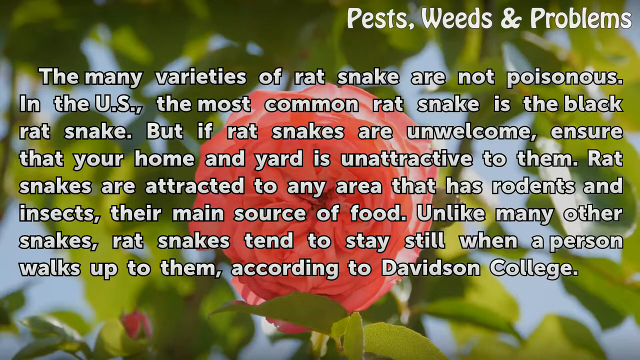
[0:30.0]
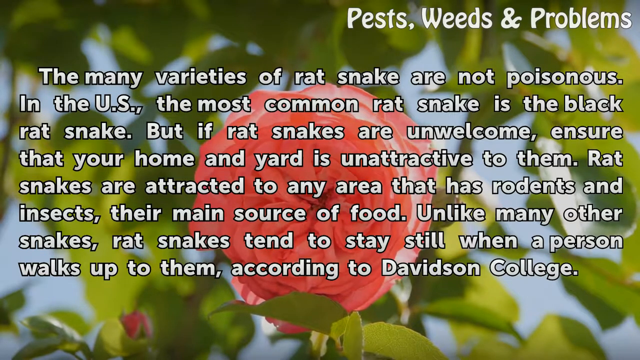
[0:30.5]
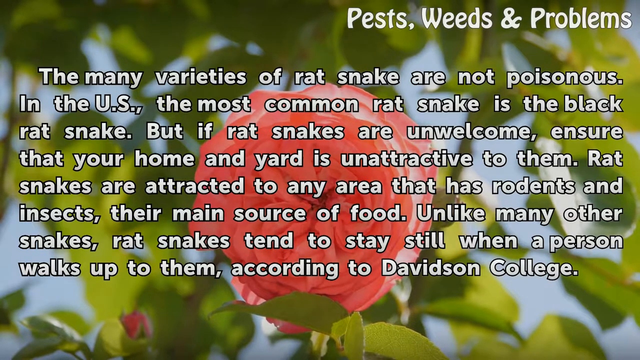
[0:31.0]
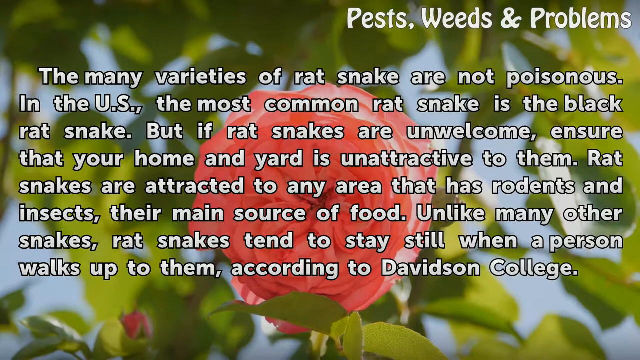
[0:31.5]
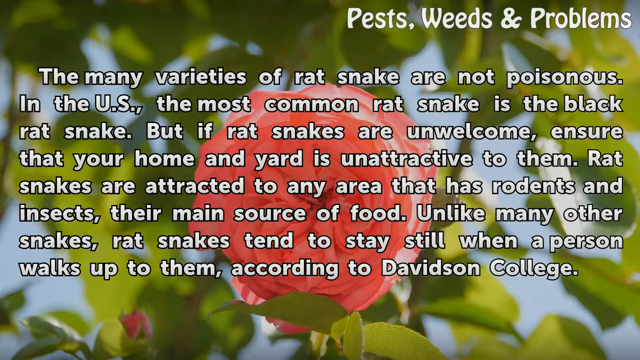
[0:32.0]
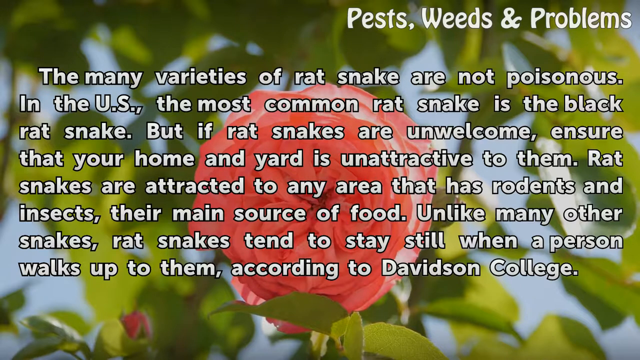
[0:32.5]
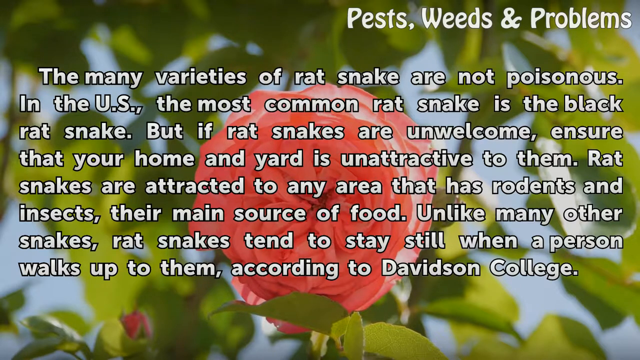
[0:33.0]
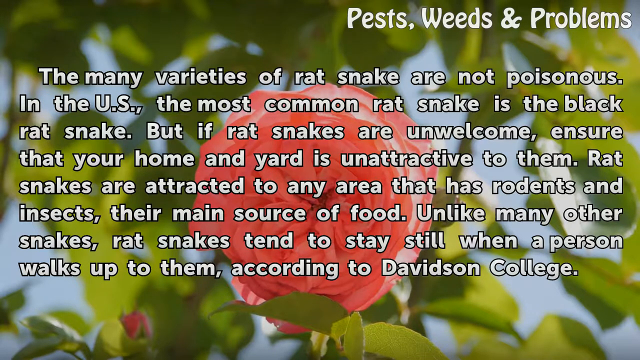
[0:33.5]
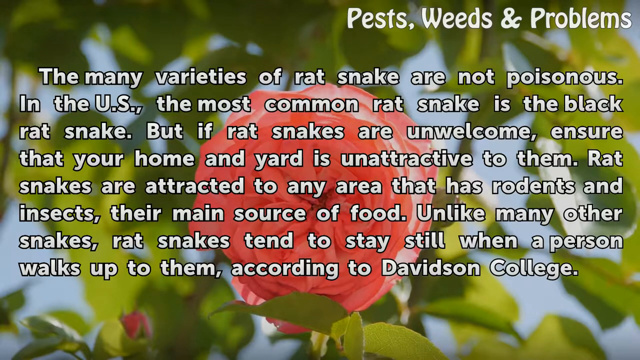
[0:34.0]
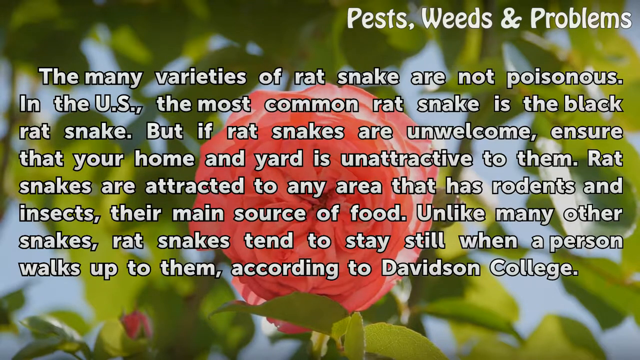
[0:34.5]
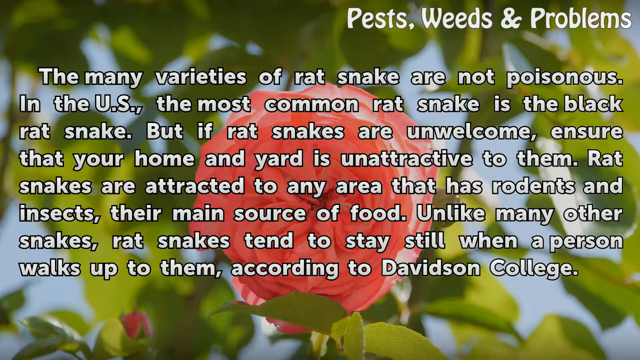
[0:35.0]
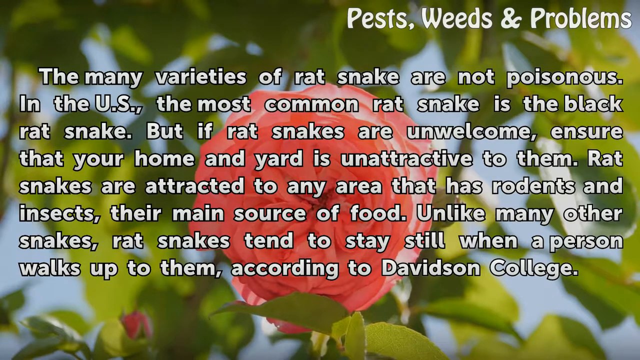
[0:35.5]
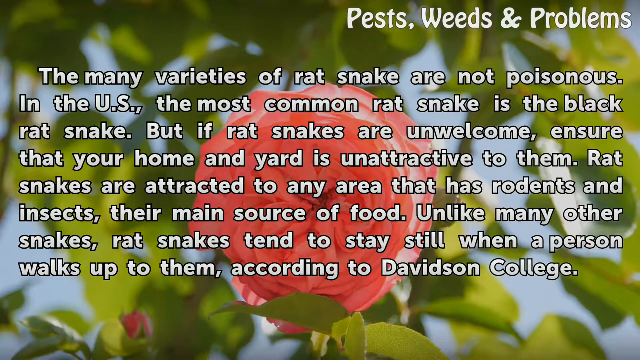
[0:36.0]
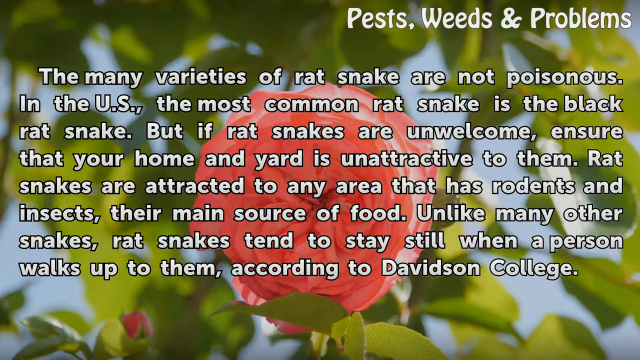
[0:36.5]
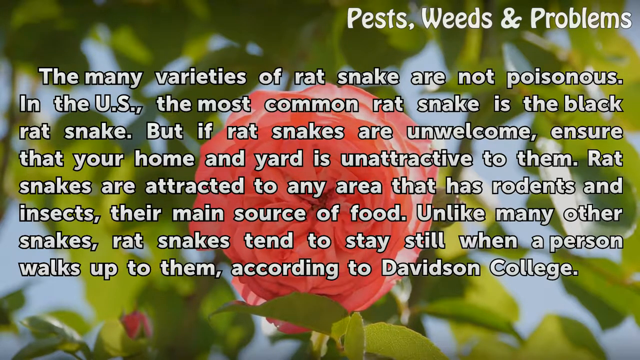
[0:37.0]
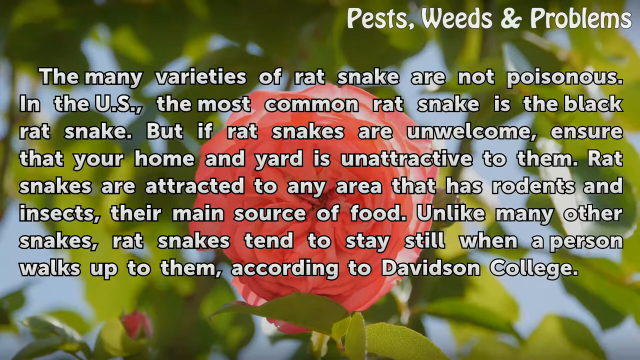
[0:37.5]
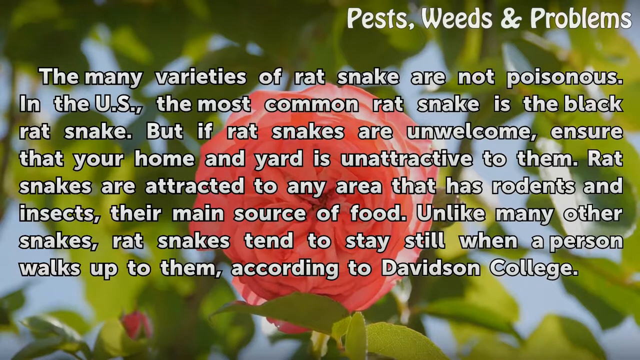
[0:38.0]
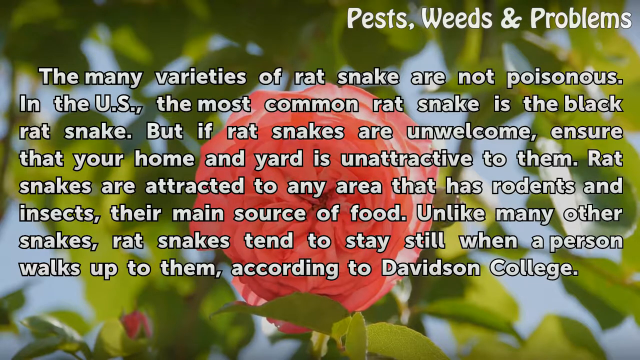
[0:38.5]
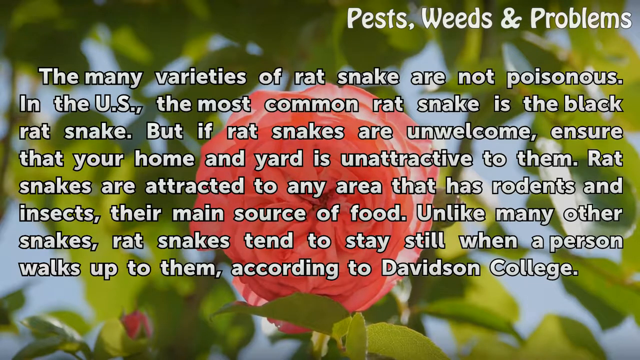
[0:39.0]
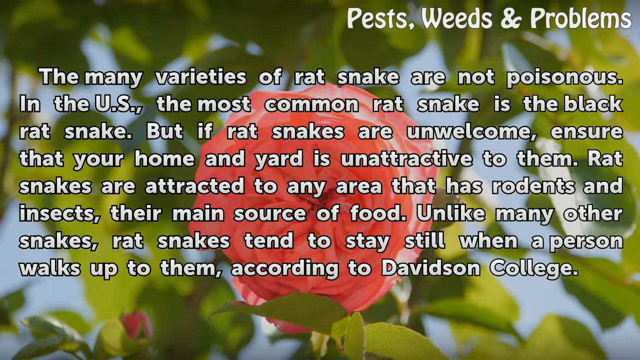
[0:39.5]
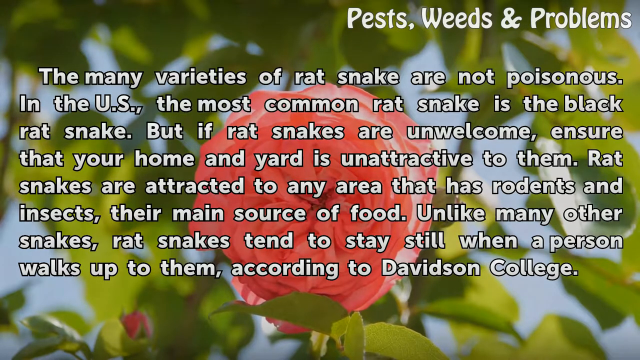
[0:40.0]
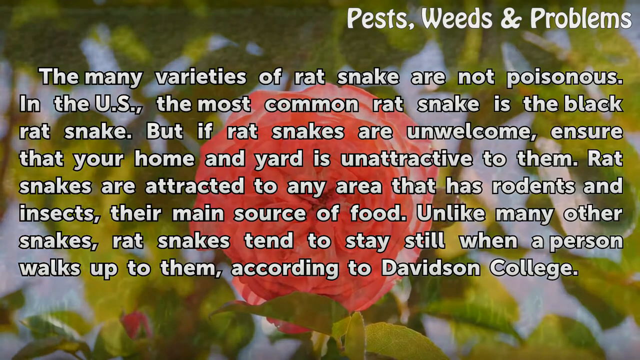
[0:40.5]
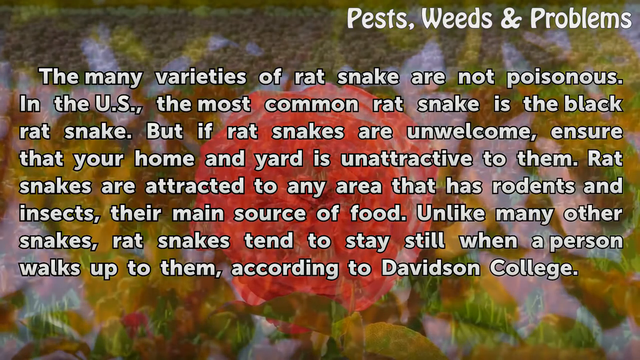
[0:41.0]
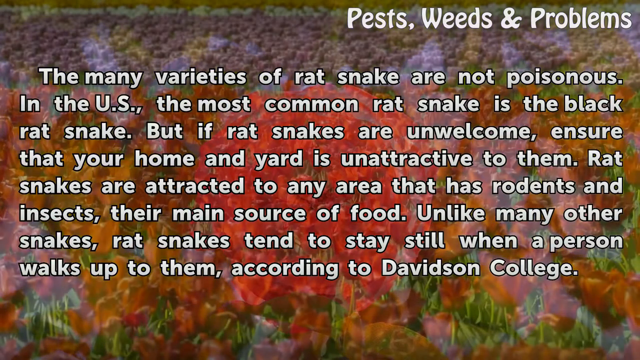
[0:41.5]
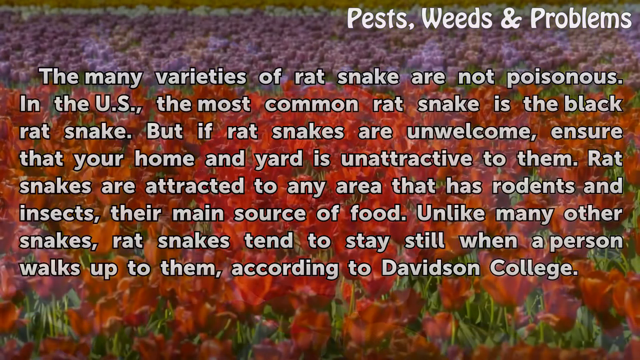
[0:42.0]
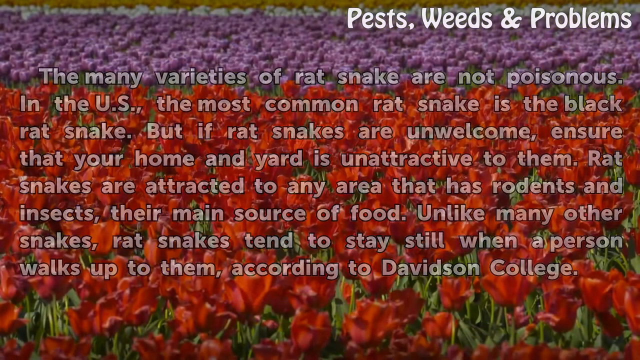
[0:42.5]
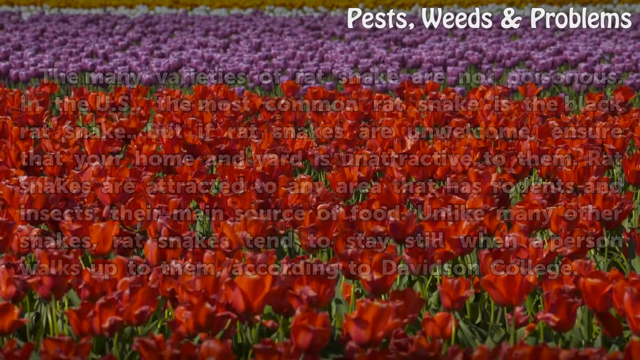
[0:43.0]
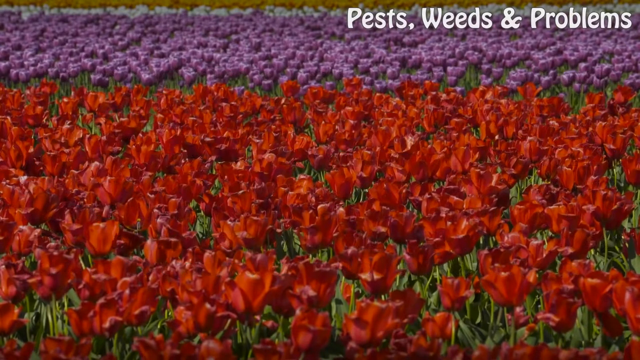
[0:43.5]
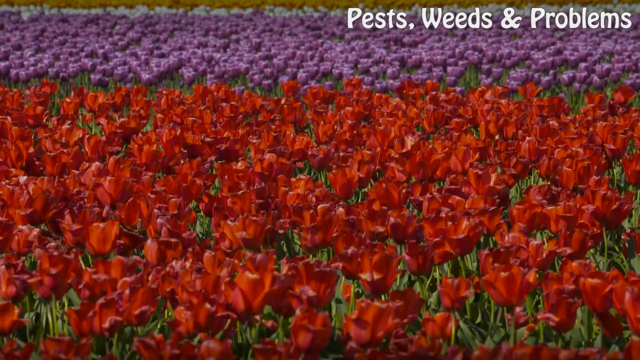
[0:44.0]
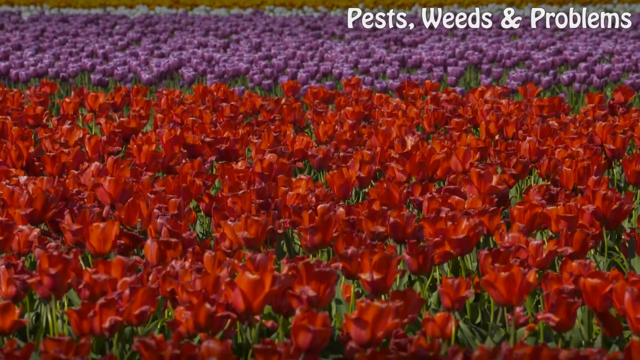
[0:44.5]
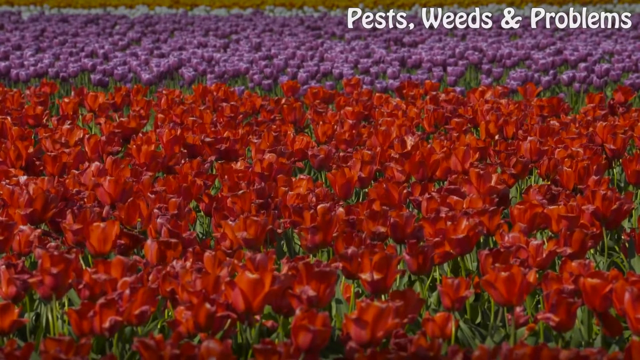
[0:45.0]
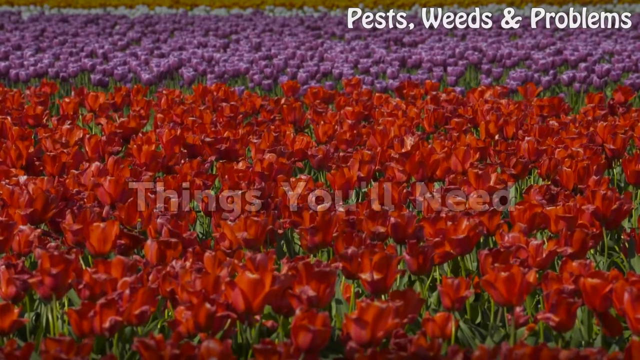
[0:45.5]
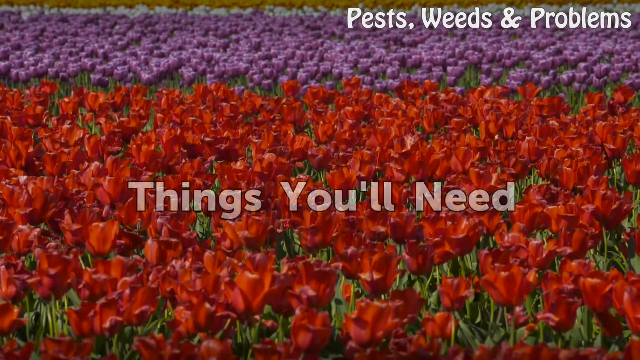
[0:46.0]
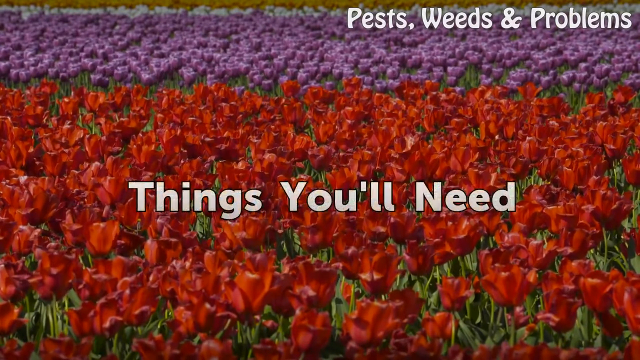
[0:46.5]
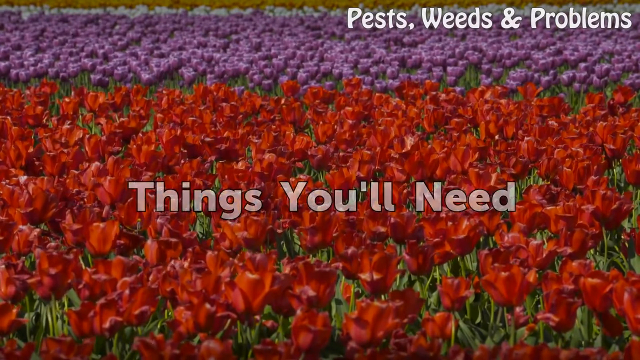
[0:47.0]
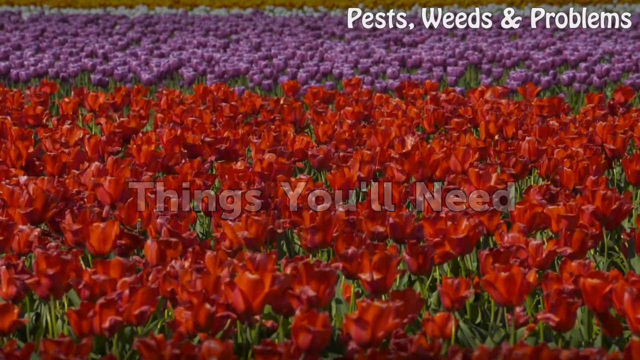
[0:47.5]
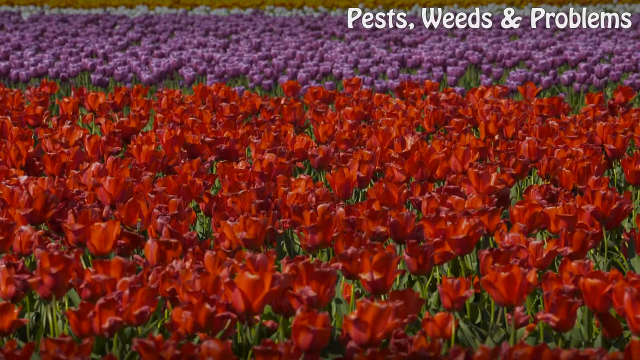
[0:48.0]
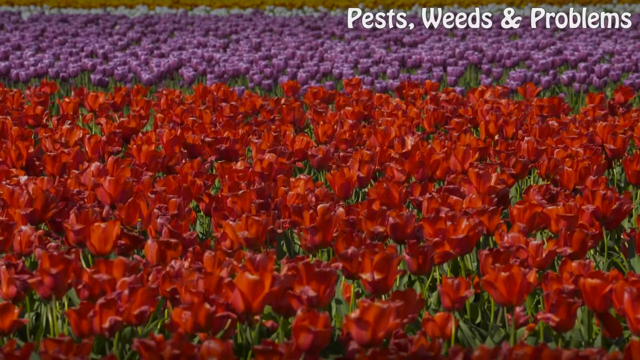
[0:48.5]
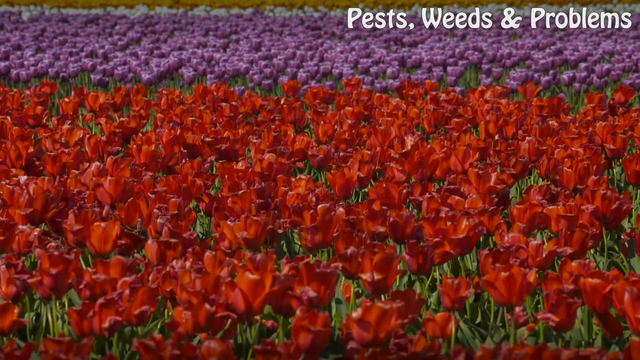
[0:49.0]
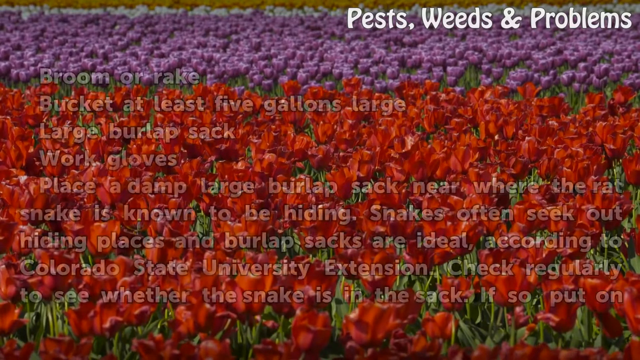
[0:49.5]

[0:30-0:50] The blurred background is blue with a mixture of dark and light green leaves, and in the center is a pink rose with its petals all crushed together in a circle. White lettering at the top right reads "Pests, Weeds, and Problems." Text in the center says "The many varieties of rat snake are not poisonous. In the U.S., the most common rat snake is the black rat snake. But if rat snakes are unwelcome, ensure that your home and yard is unattractive to them. Rat snakes are attracted to any area that has rodents and insects." It continues "Unlike other snakes, rat snakes tend to stay still when a person walks up to them, according to Davidson College." The background then changes to orange flowers, then a row of white, then a section of purple, with green stems at the bottom and a final row of all red flowers. The white lettering in the center now reads "things you'll need."